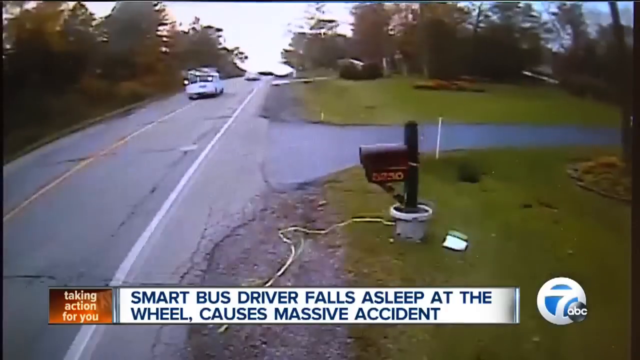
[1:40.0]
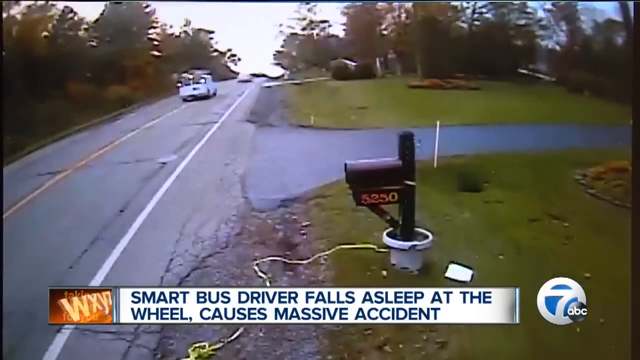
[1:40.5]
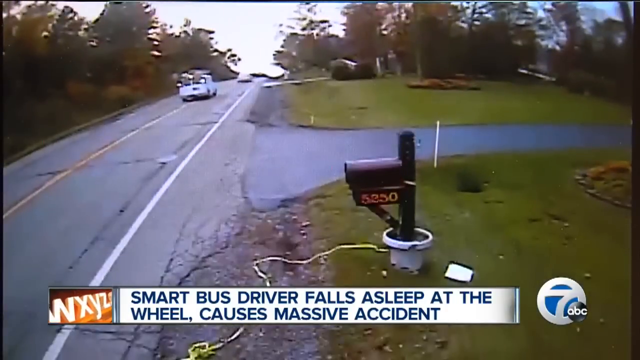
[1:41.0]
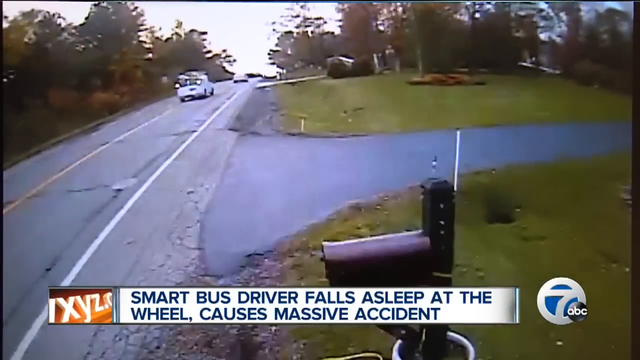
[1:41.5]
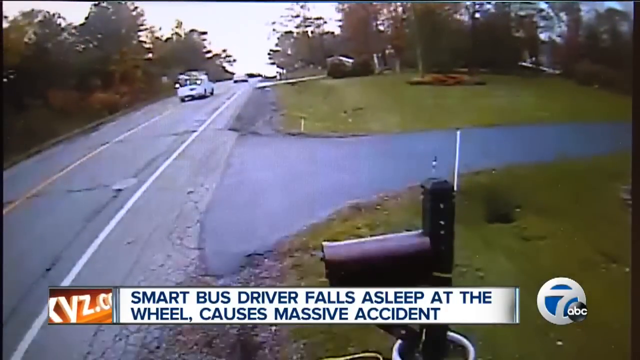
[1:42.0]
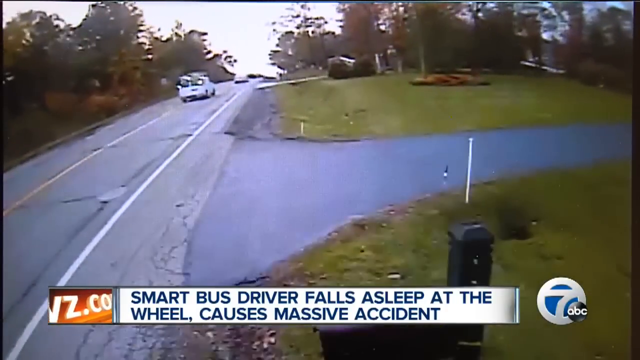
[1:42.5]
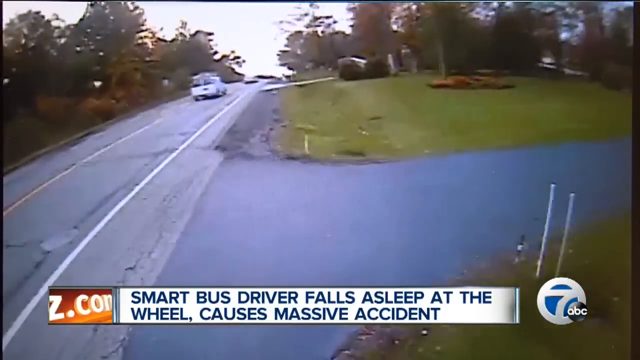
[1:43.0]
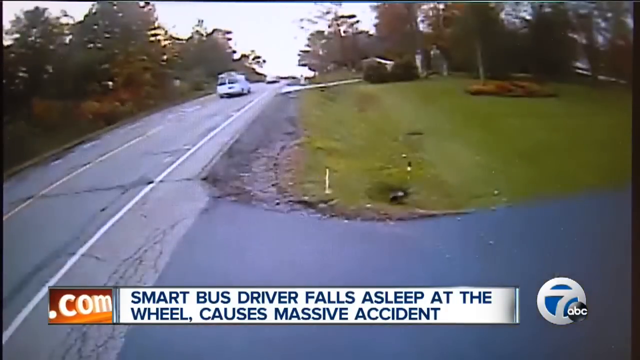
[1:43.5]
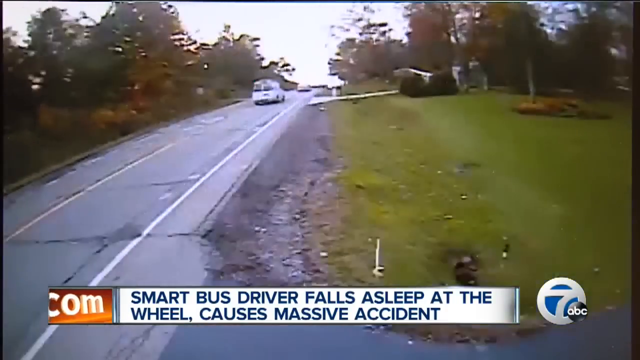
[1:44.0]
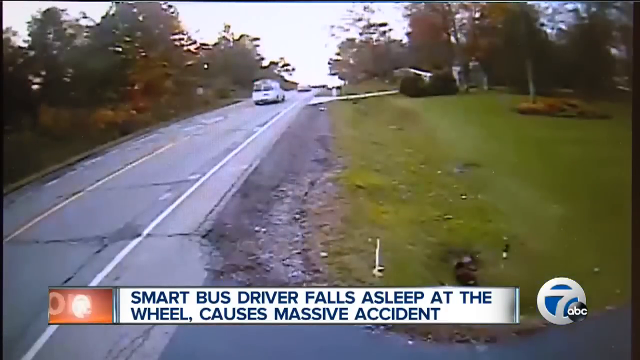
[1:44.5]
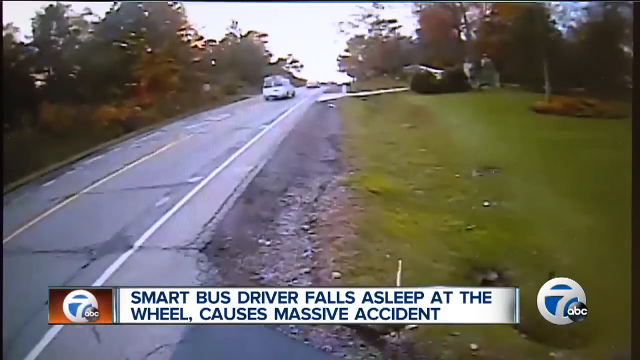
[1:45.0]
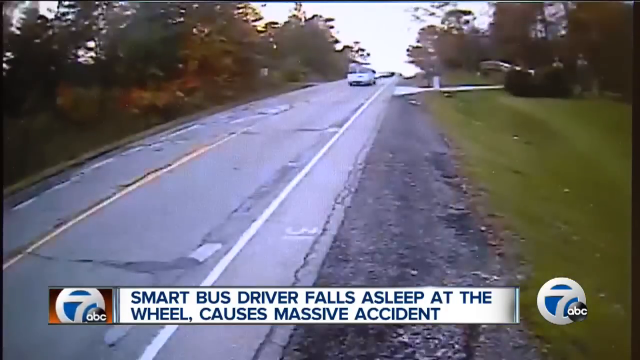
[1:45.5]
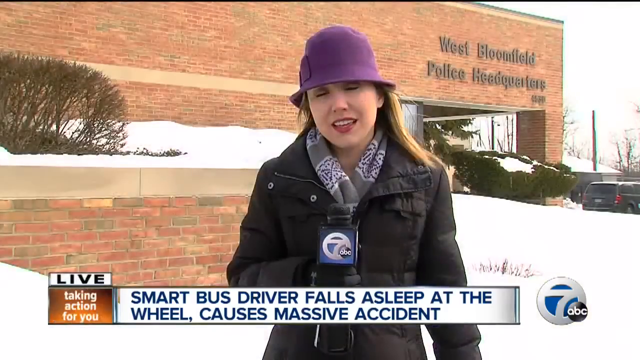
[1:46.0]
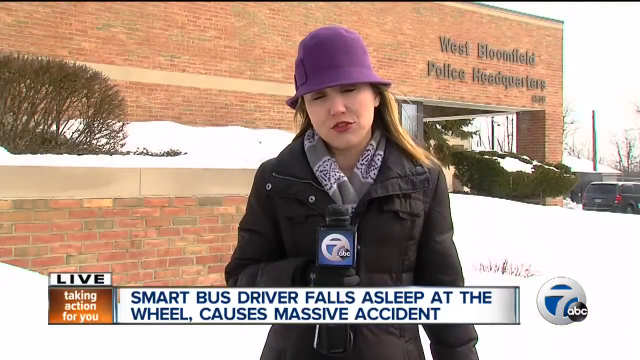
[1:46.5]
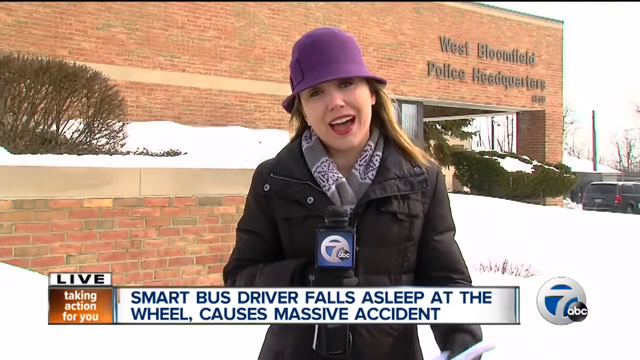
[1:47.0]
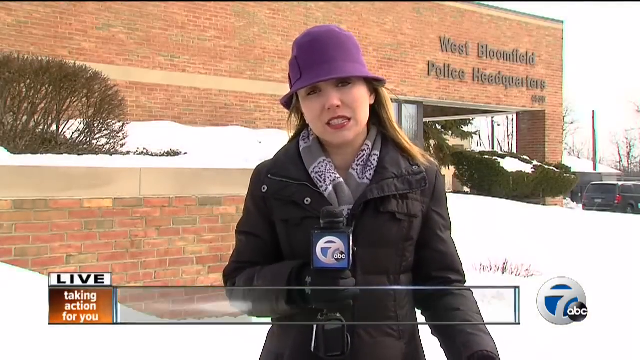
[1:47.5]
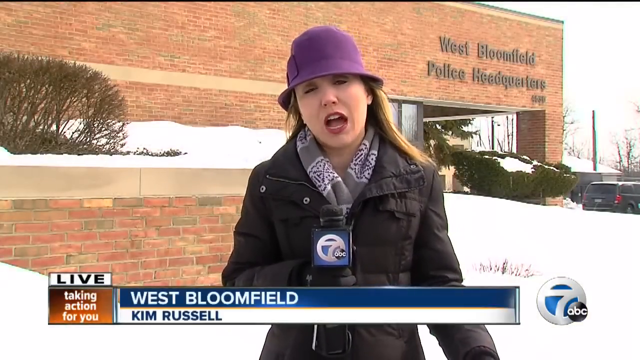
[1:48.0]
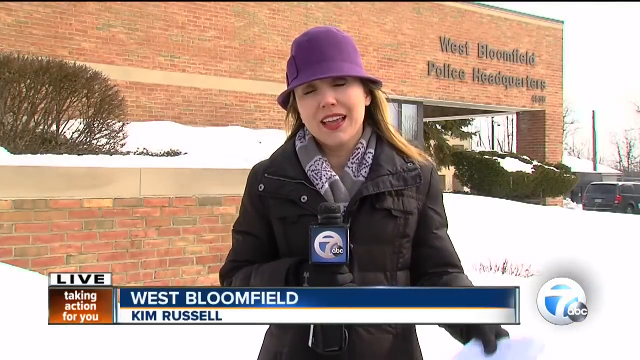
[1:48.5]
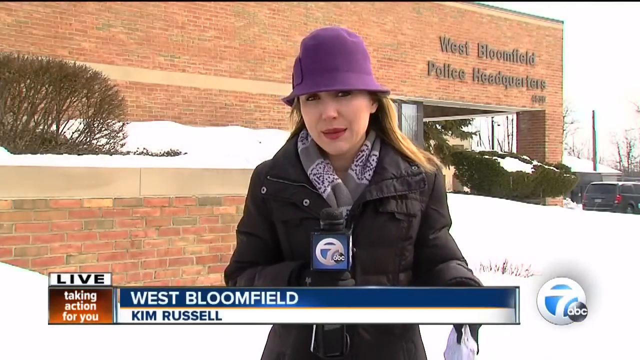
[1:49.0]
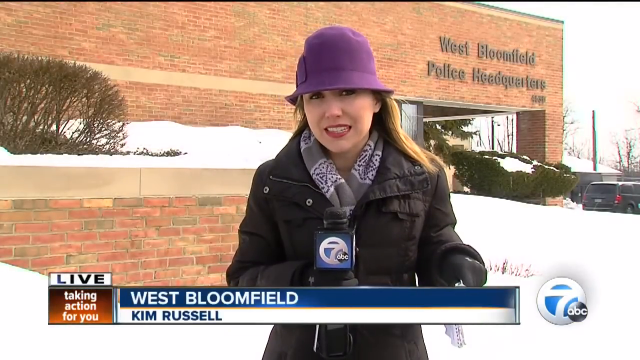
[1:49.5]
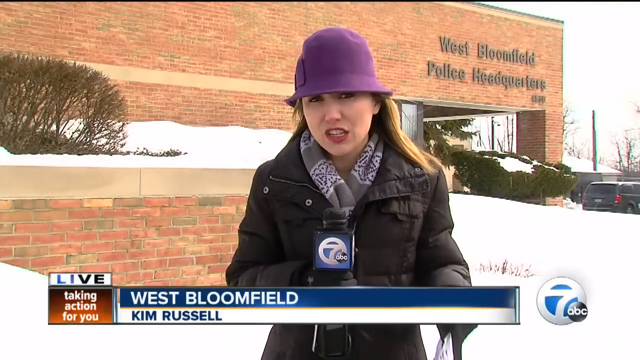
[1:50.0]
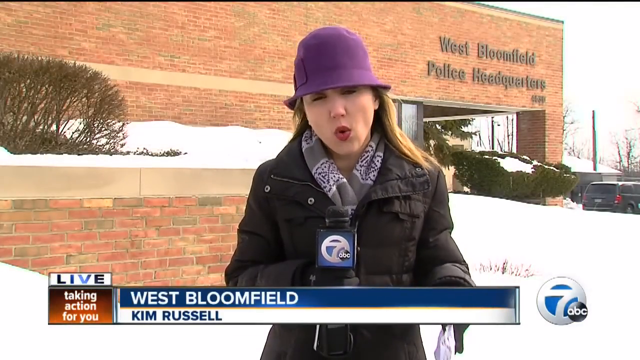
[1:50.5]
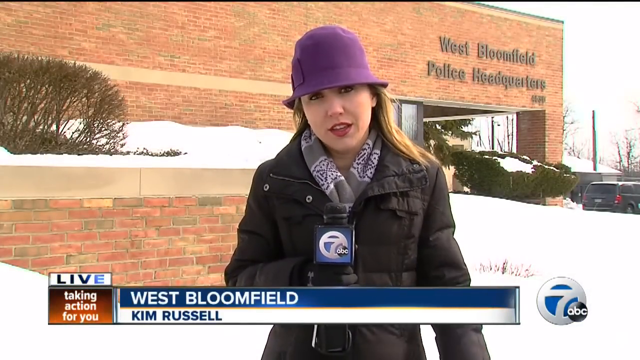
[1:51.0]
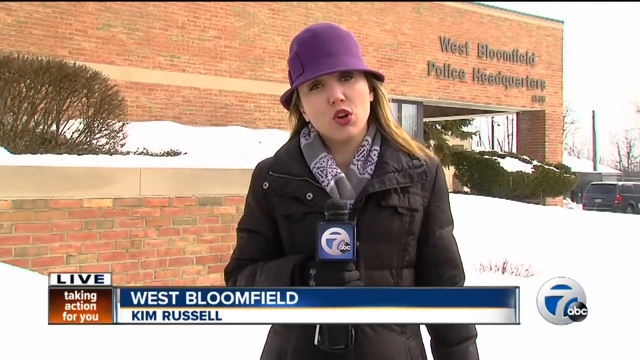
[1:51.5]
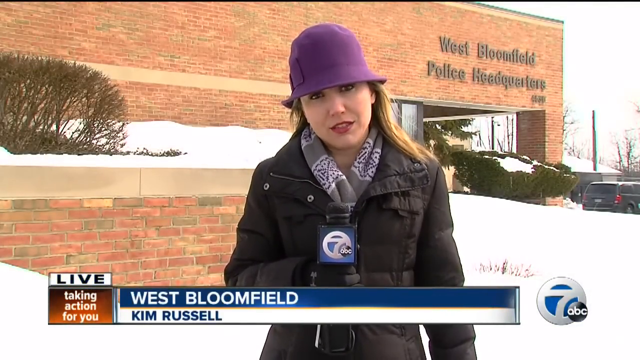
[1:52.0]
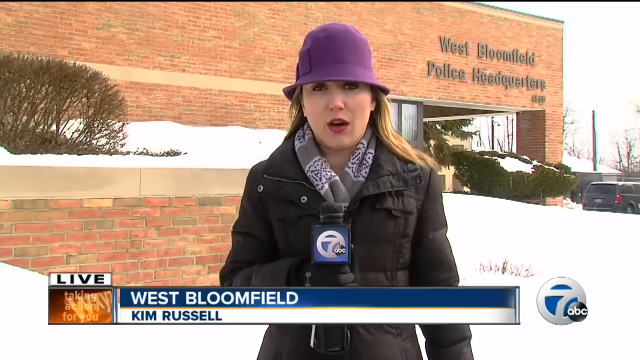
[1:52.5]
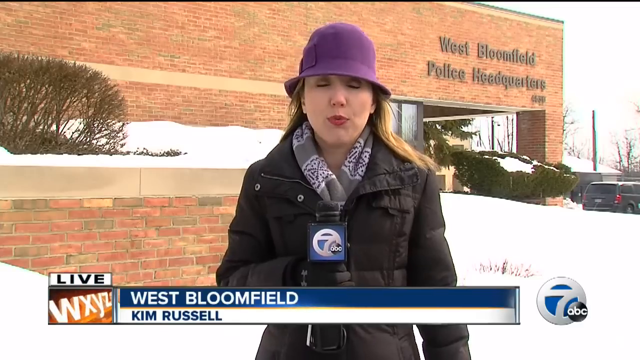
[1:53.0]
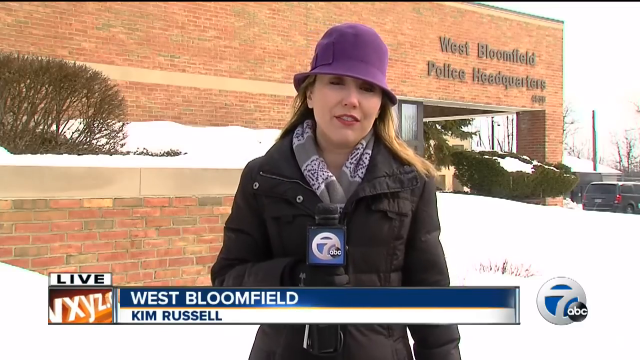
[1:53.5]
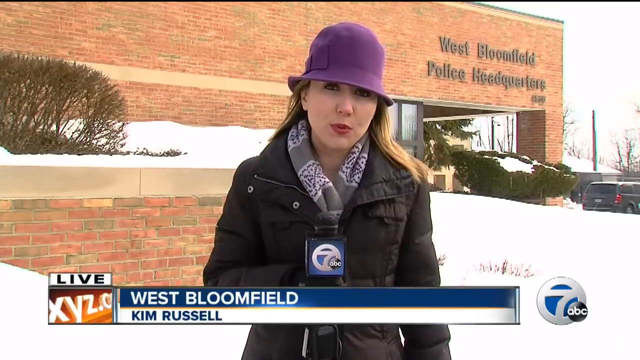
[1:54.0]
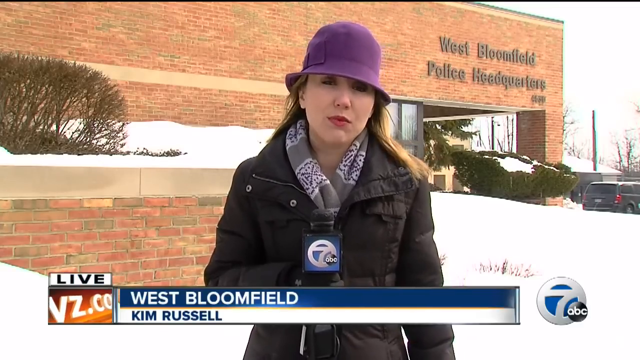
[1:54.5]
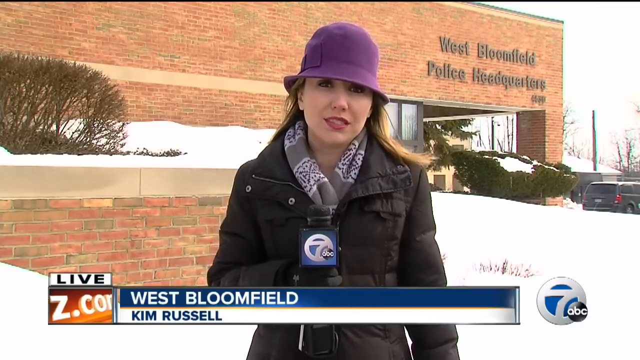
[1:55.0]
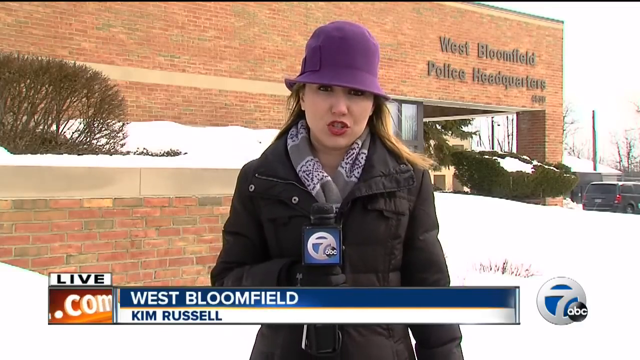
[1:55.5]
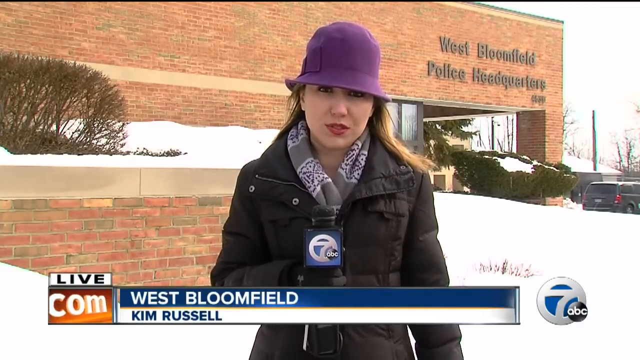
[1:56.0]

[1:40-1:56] A mailbox is shown as the video slows down. The video then returns to reporter Kim Russell in front of the West Bloomfield Police Headquarters, speaking to the camera with a microphone branded "7ABC". She is outside, and there appears to be snow on the ground. This part intermixes the final portion of the forward-facing accident footage with her reporting.